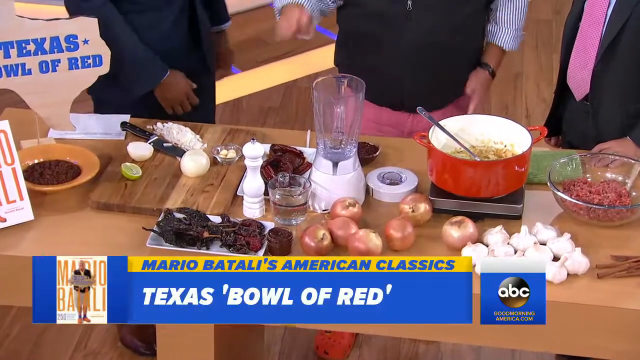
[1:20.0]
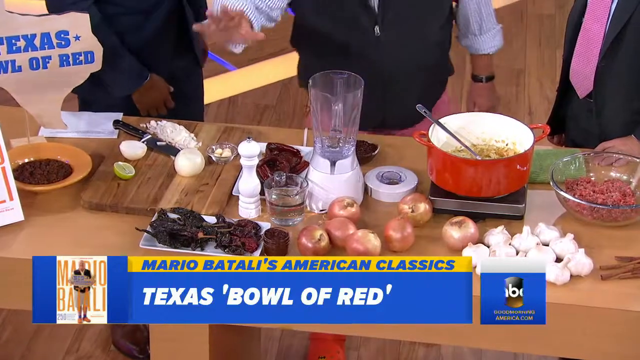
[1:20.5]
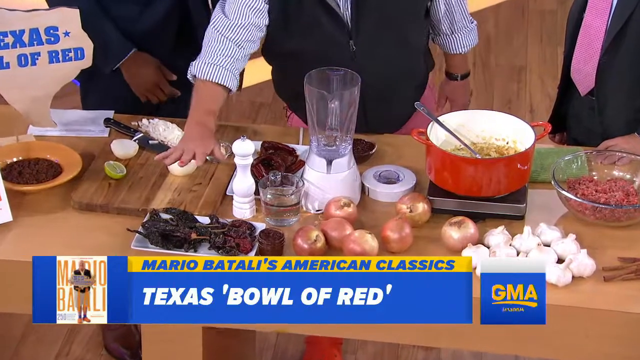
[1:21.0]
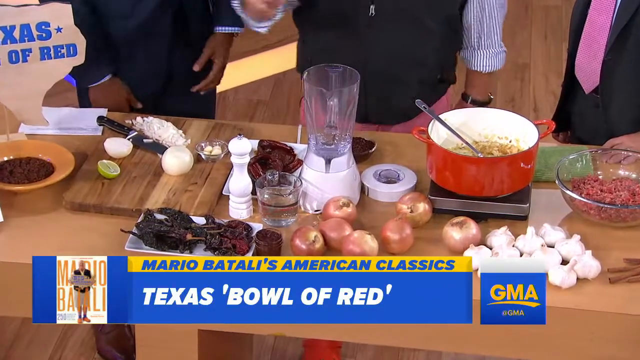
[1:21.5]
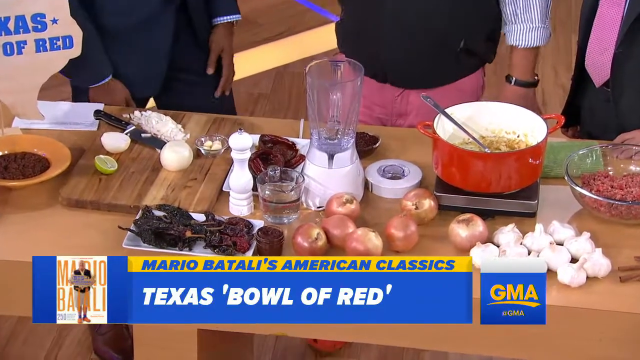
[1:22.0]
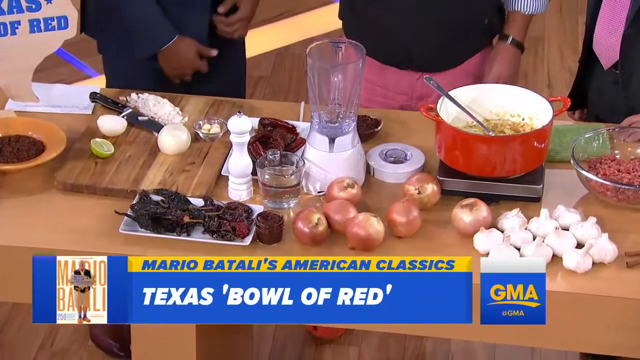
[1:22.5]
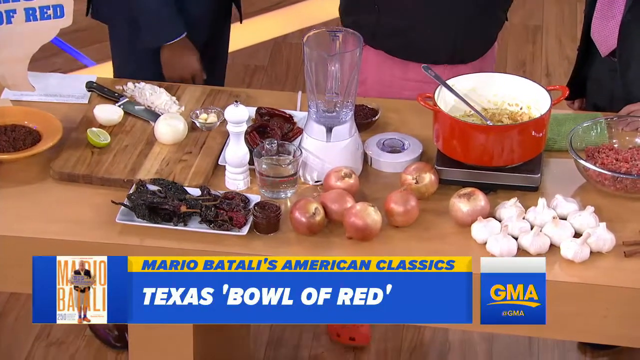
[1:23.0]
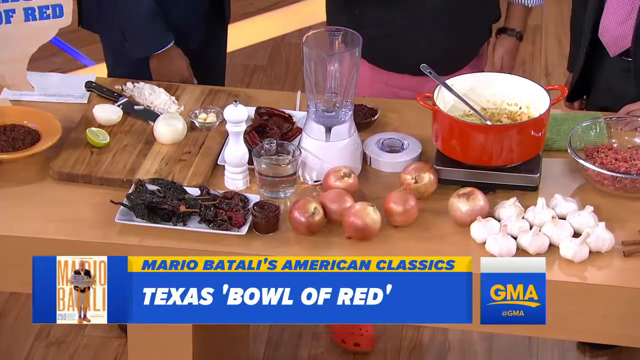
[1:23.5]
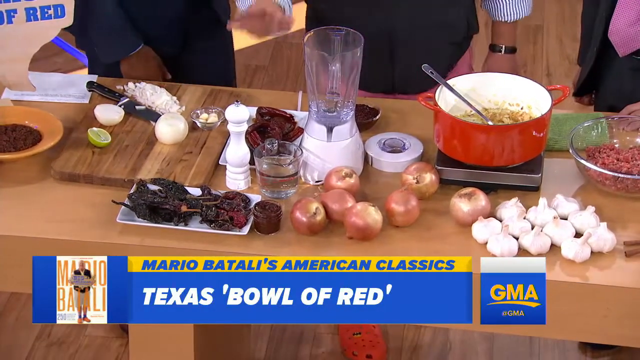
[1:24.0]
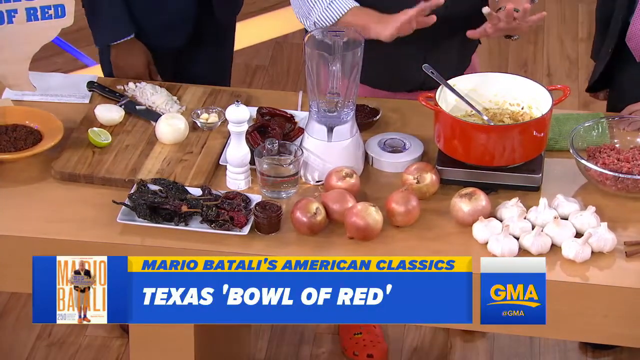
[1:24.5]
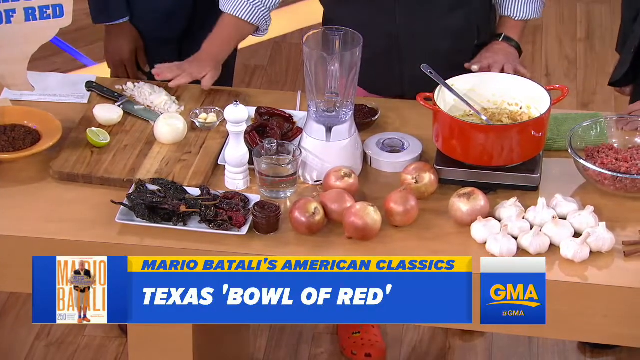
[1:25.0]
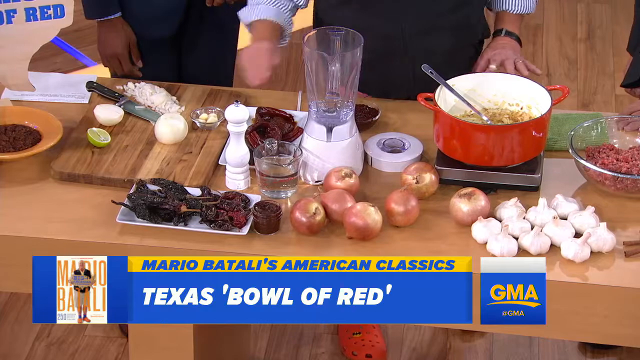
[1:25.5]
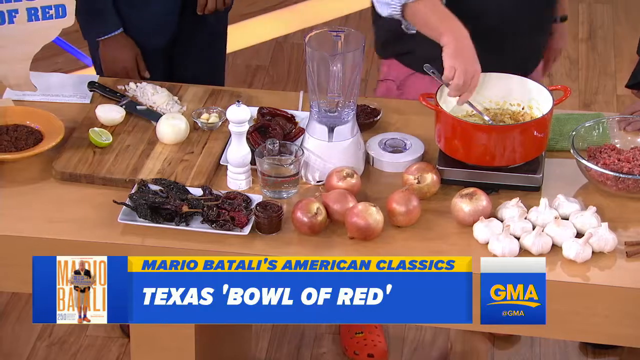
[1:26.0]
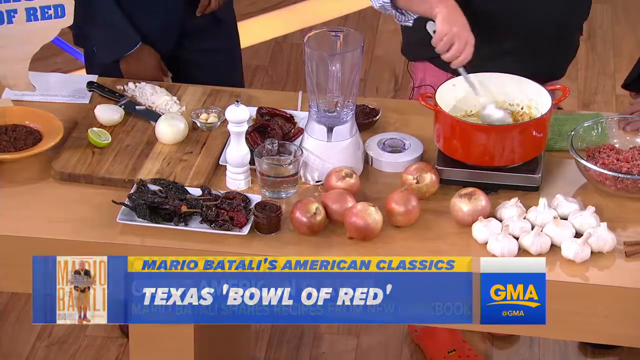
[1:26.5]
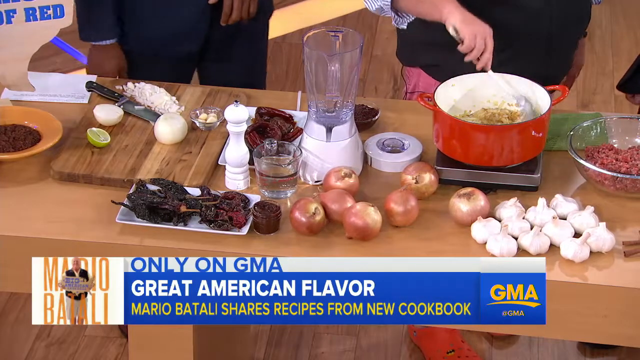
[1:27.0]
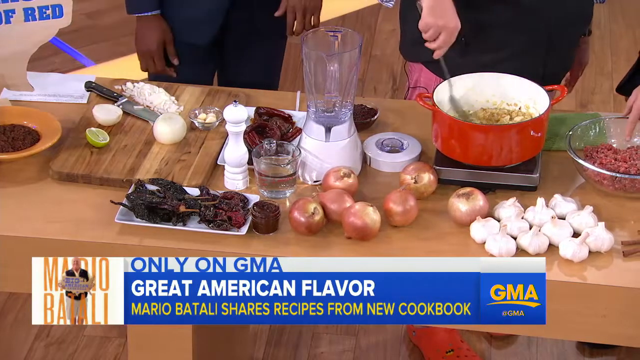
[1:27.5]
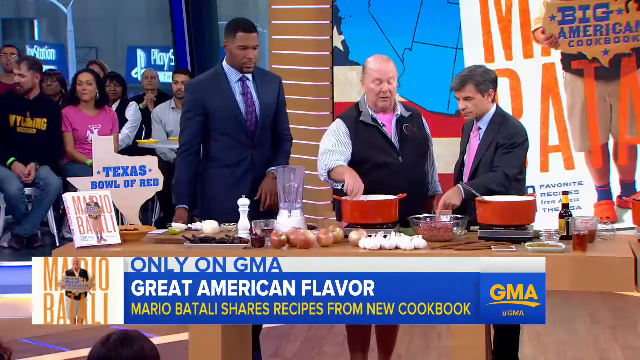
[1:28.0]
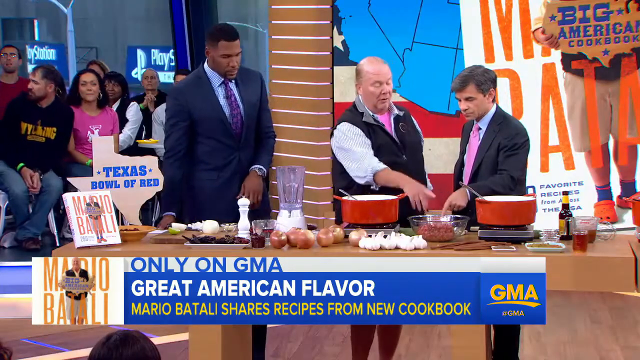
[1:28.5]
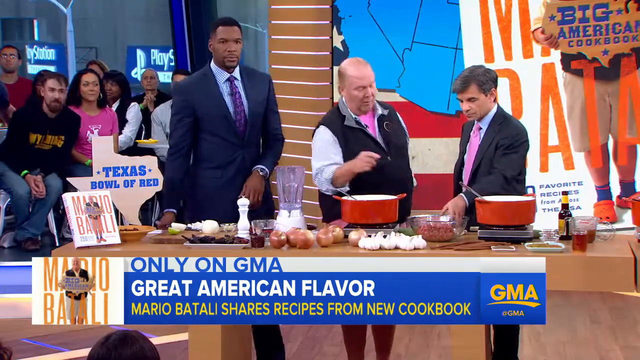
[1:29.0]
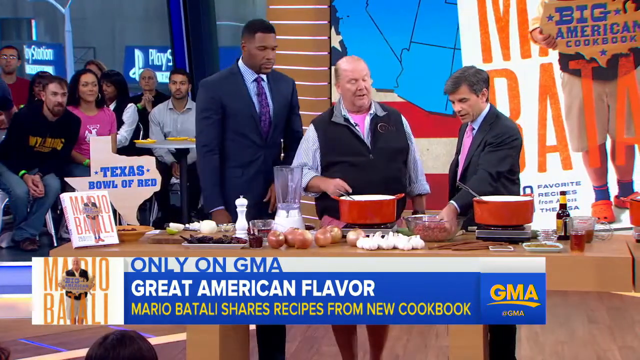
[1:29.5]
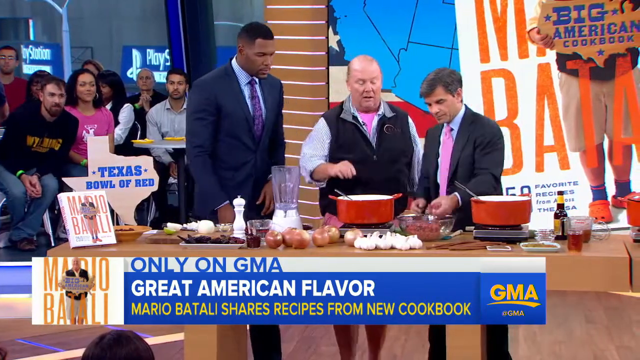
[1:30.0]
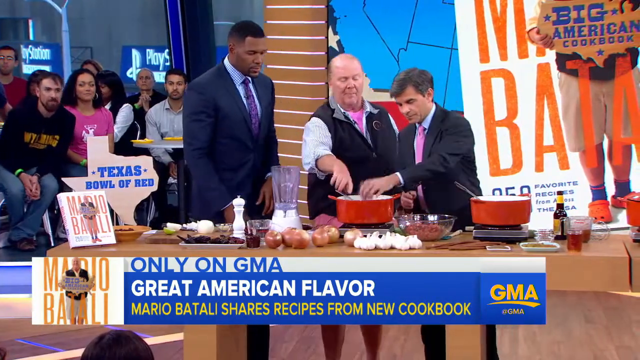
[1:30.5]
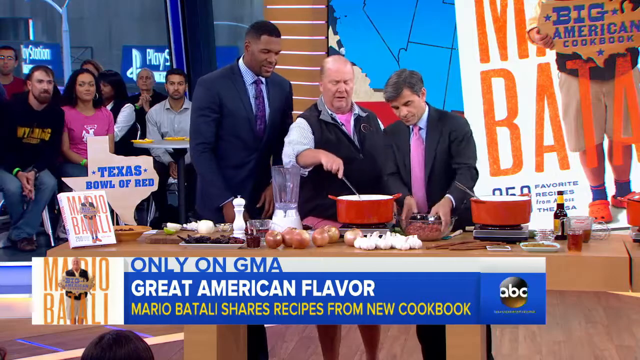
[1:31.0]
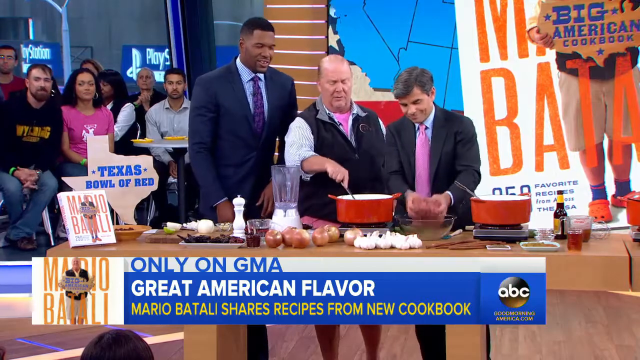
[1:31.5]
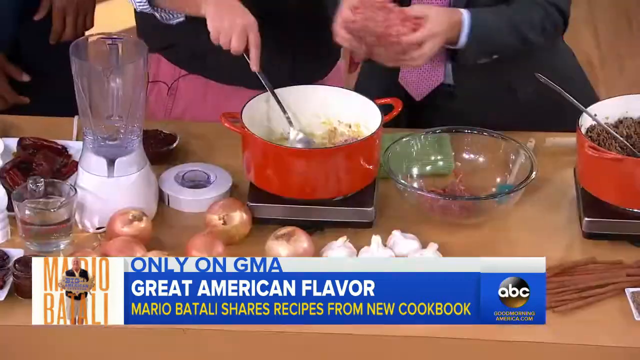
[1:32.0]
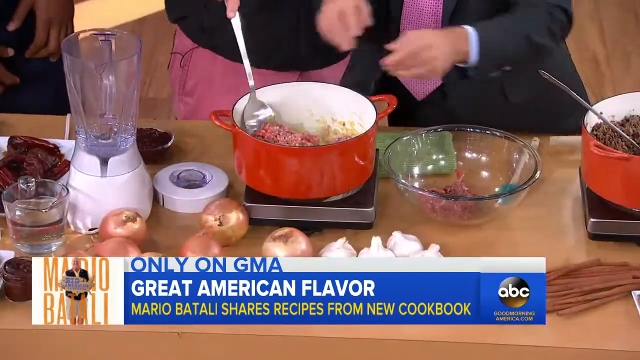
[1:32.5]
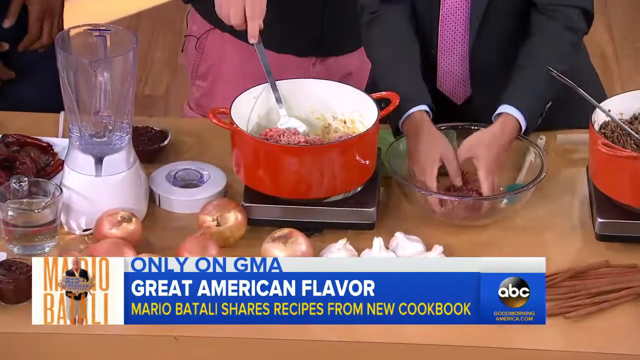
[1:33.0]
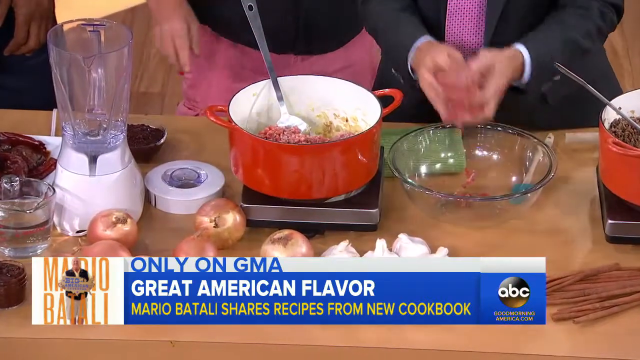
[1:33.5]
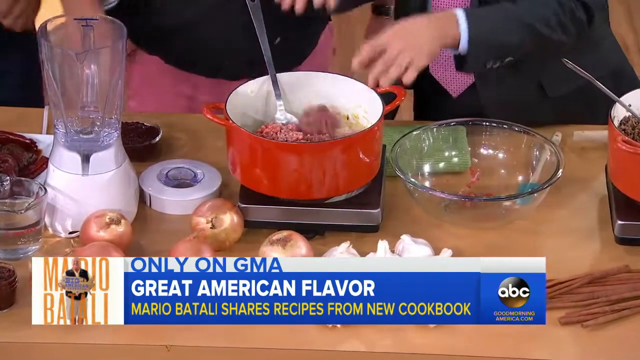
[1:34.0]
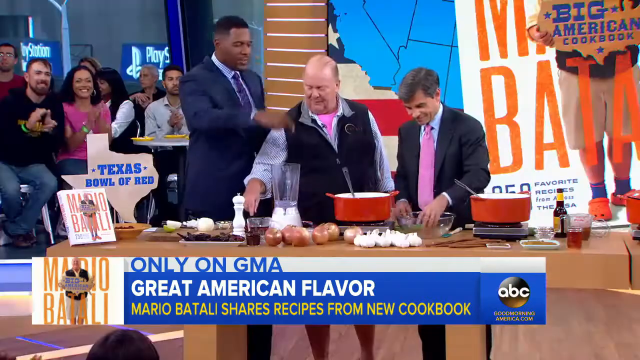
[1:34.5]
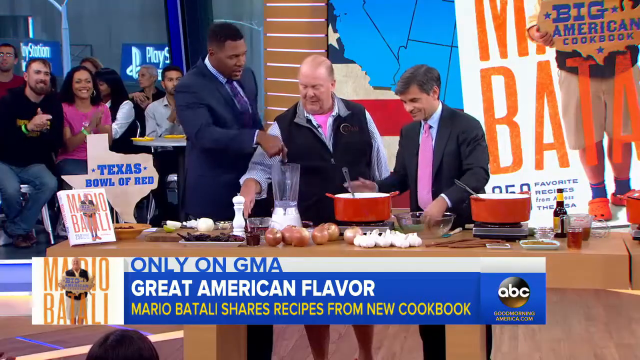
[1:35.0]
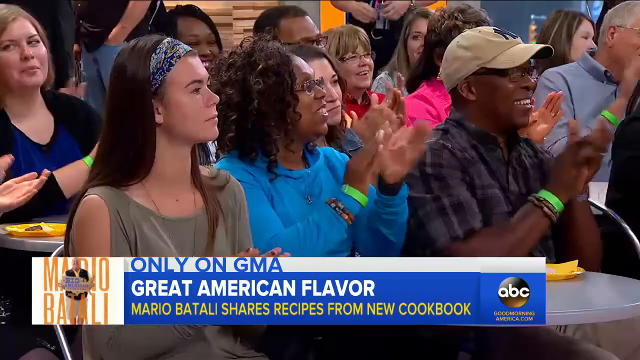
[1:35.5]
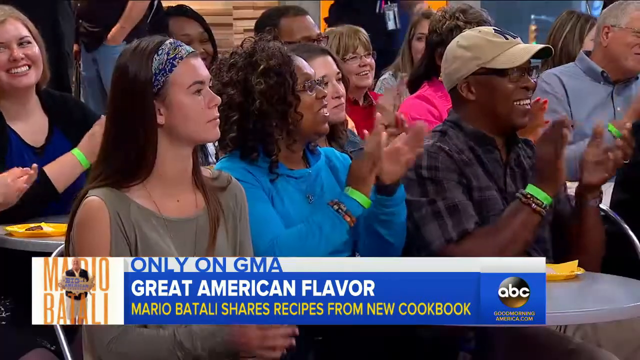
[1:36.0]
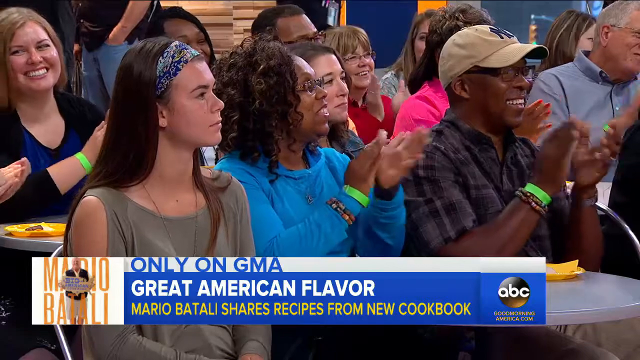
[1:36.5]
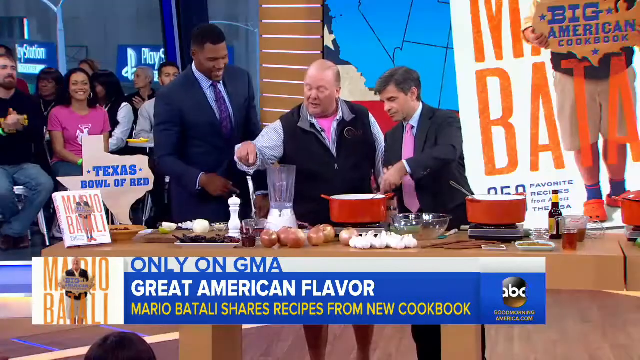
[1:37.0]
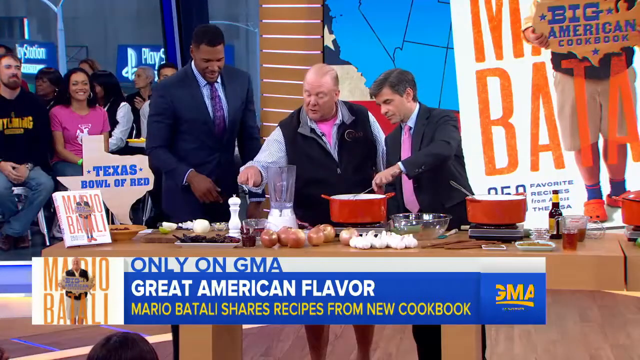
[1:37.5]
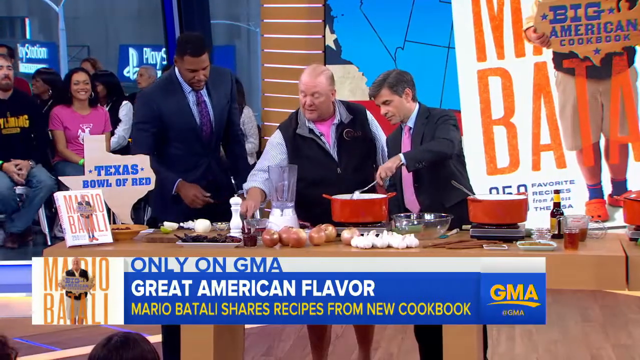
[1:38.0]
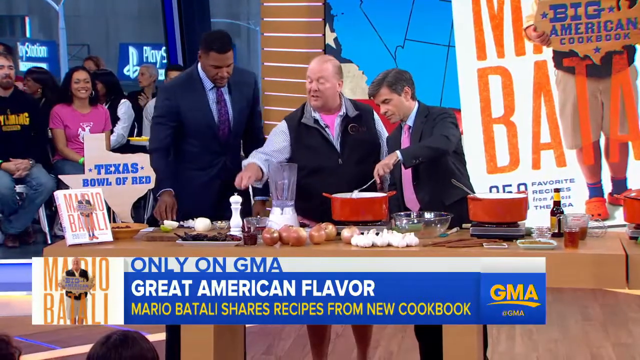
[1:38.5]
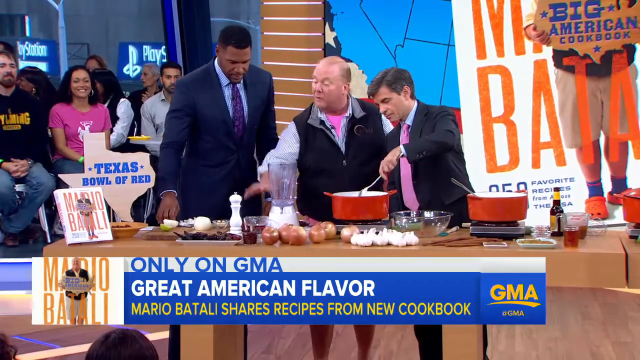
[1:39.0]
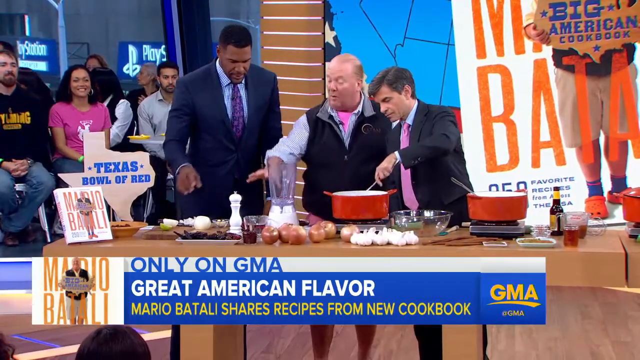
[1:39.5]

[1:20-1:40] The camera zooms in on the food being placed on the table. Text at the very bottom reads "Texas Bowl of Red, Mario Batali's American Classics on ABC," and his book is on the left side. On the table are a blender, a salt shaker, unpeeled white garlic, onions, a bowl, a pan, some meat, peppers, and a chopping board with onions and a knife on it. A man puts his right hand over the cutting board, talking about the food. The camera zooms in on the food, and the man in the middle seems to be talking about all his foods and products. The camera zooms out: the man in the center uses his right hand to mix what is in the pot while the man to his left puts a bunch of meat into the pot. He then stops stirring, gets ingredients, and sprinkles in some kind of seasoning.